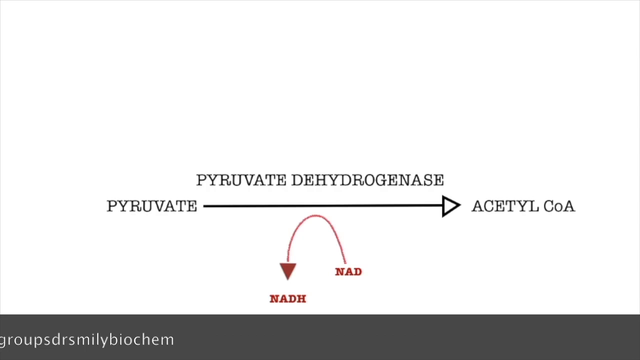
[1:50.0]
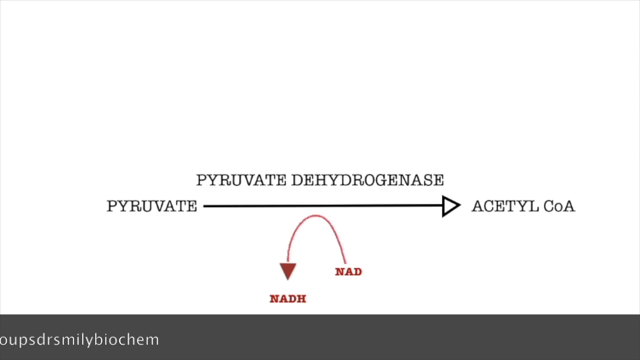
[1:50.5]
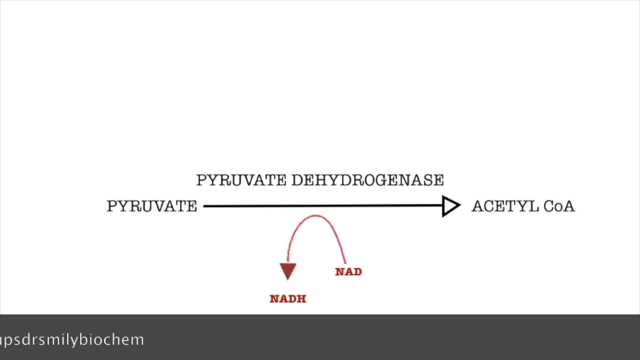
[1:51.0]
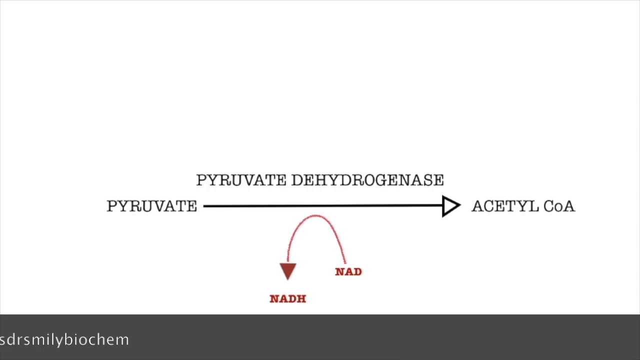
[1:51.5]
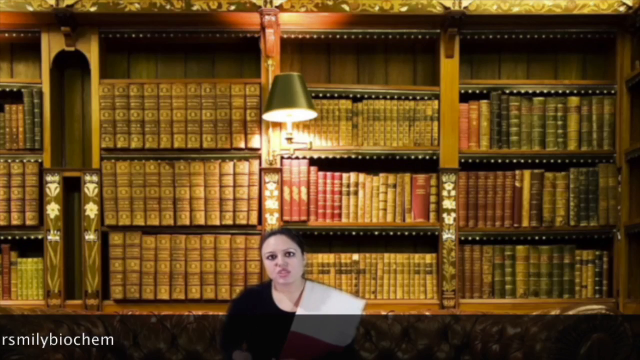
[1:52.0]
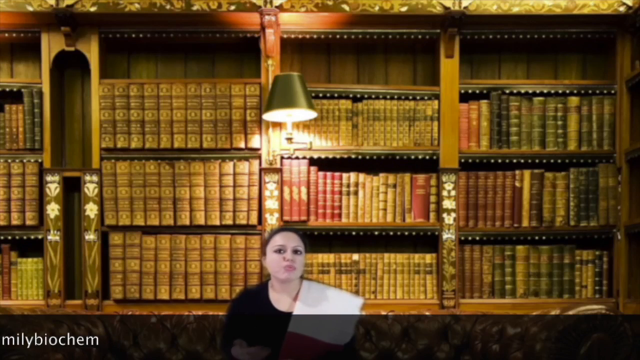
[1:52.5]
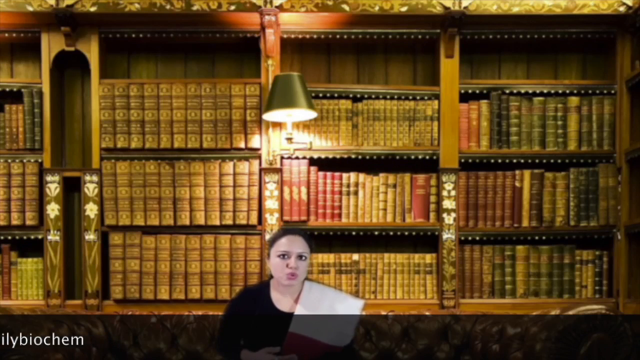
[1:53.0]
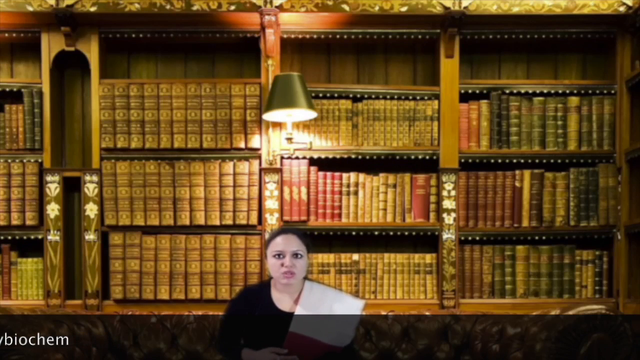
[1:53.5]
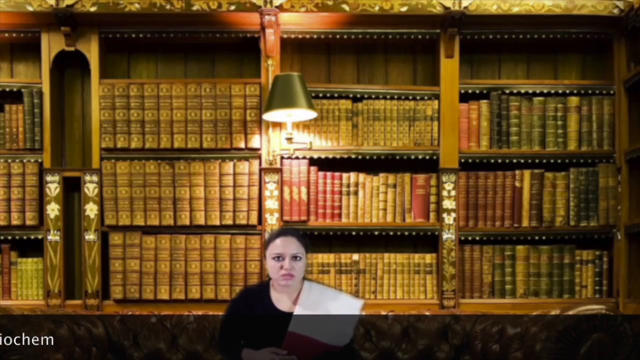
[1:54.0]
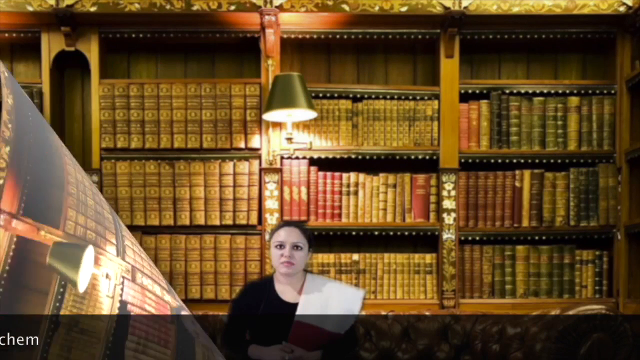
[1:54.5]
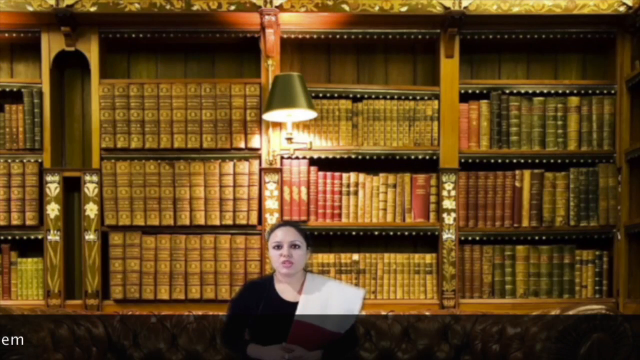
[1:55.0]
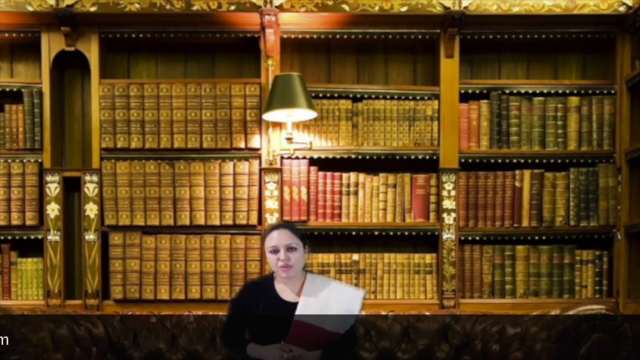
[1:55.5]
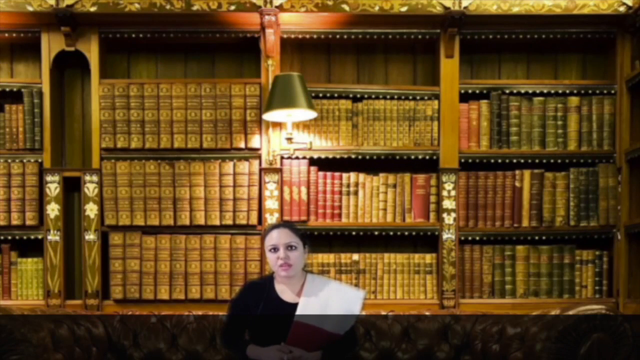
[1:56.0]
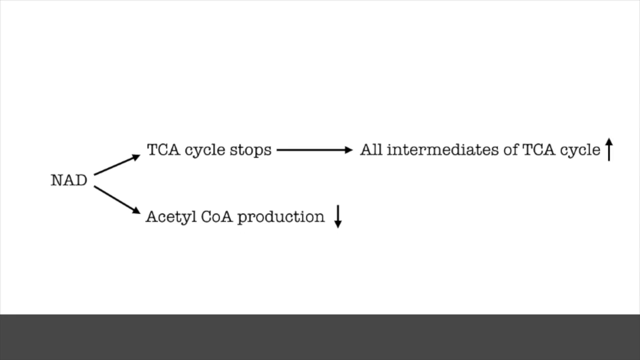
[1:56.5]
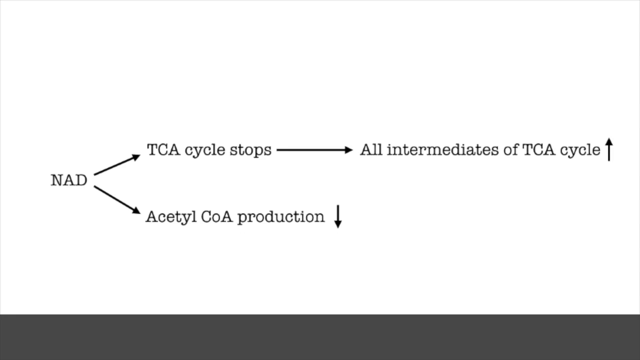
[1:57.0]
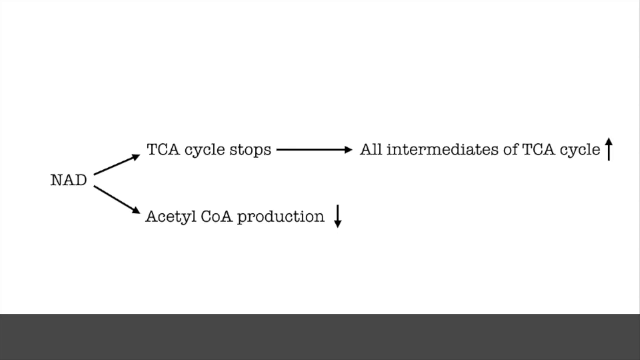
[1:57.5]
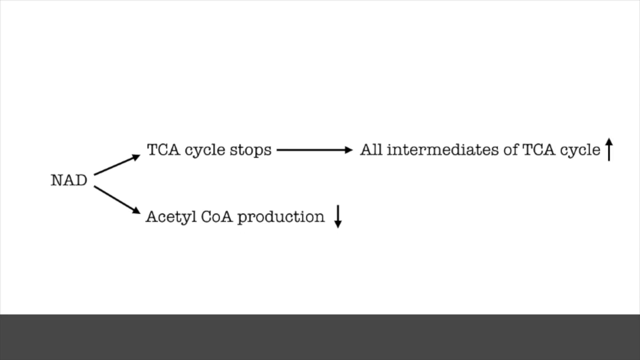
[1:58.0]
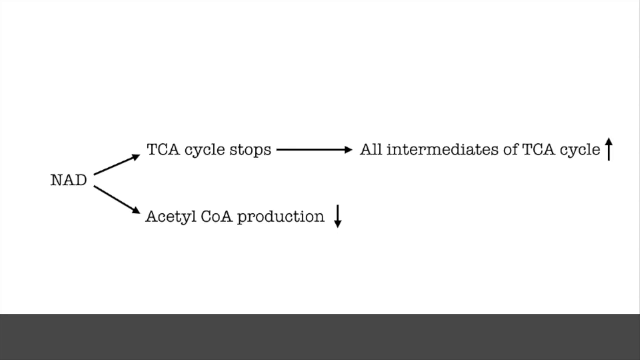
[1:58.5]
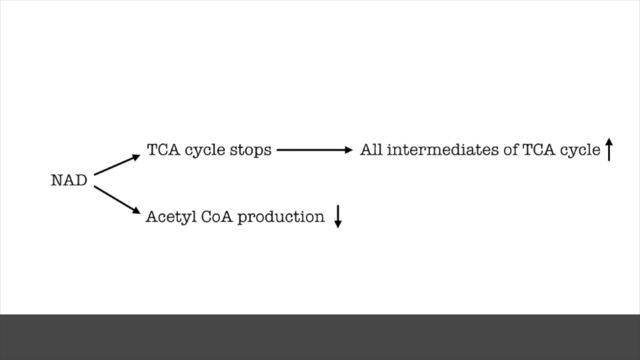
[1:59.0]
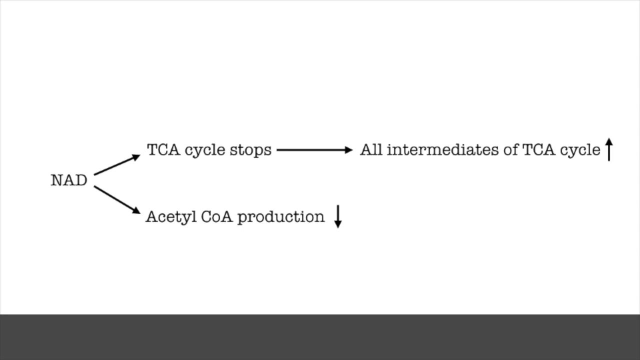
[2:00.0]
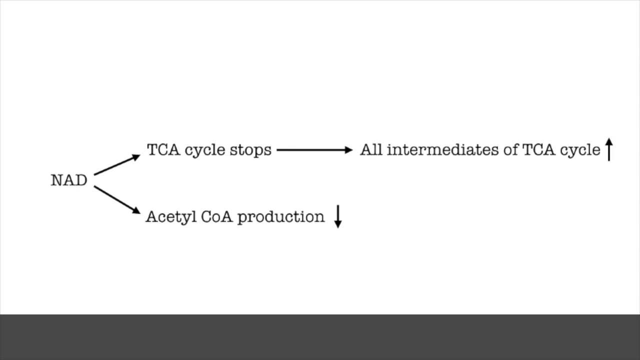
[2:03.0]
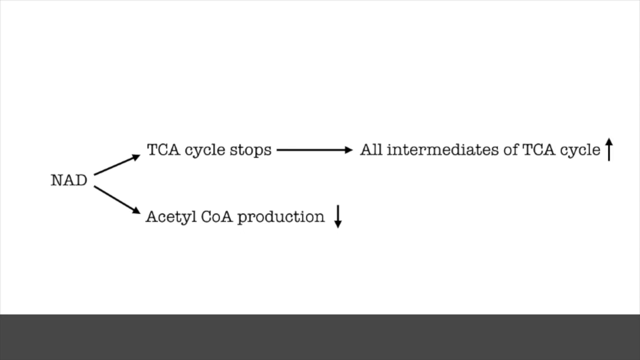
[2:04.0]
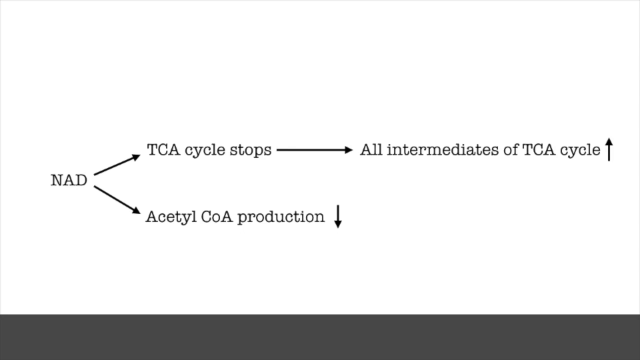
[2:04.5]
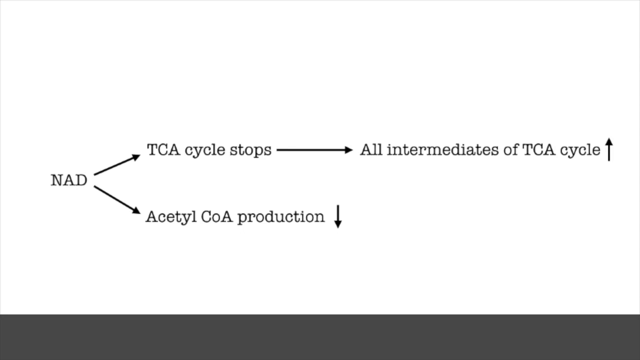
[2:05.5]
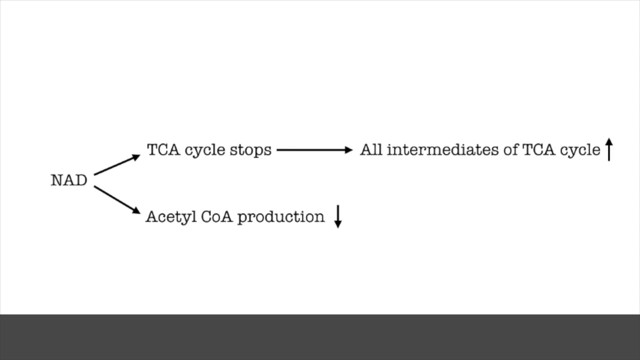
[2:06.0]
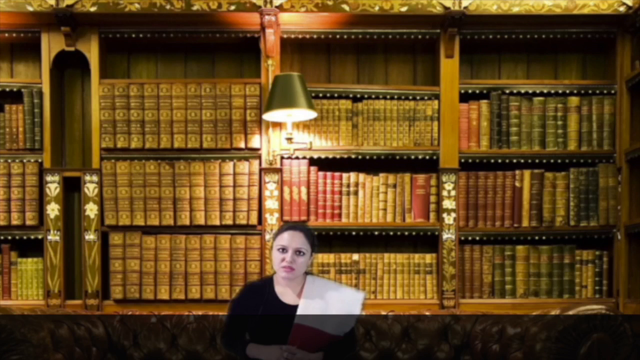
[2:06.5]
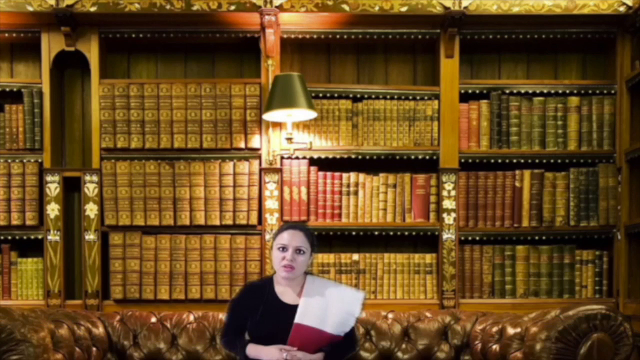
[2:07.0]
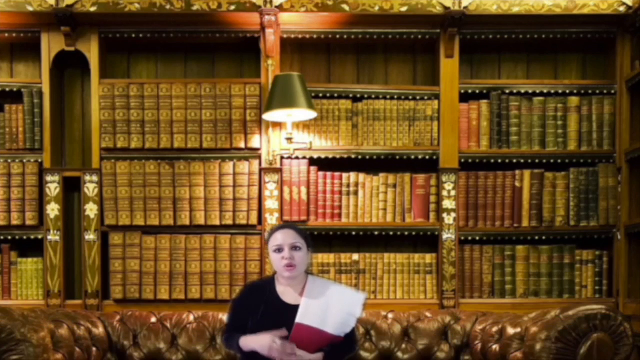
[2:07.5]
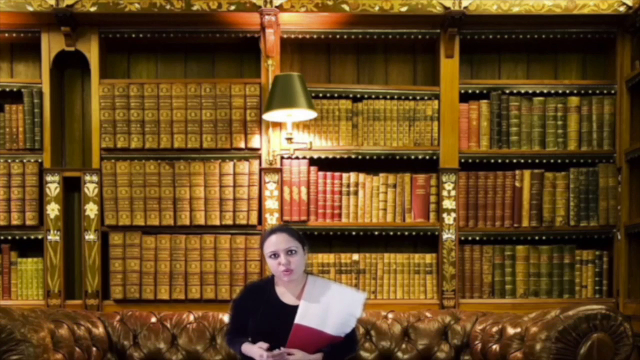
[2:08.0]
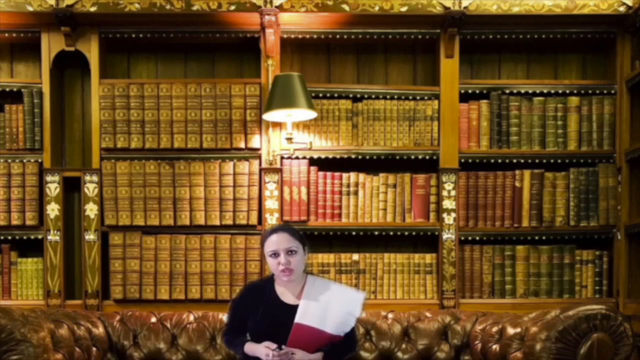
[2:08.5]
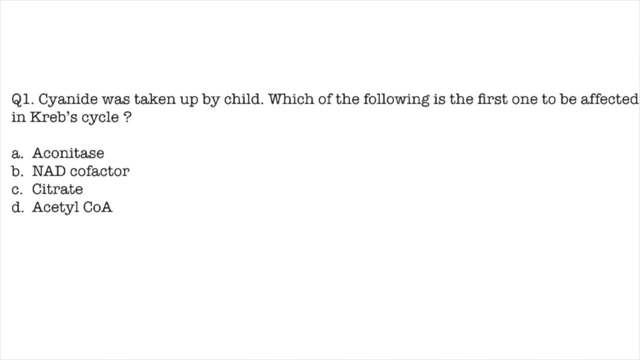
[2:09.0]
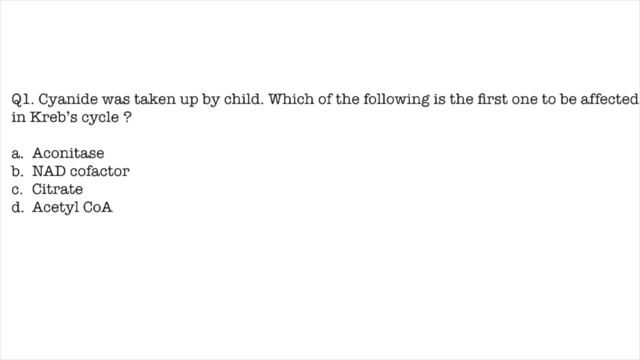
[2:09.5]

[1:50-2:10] A pyruvate dehydrogenase diagram shows pyruvate going down an arrow and turning into acetyl-CoA, and at the bottom of the screen, in red, NAD with an arrow turning into NADH. Dr. Smiley comes back, shown sitting on the couch and talking, with the bookshelf backdrop behind her. What looks like a page suddenly peels across the screen as if being peeled off, but the same image is left: Dr. Smiley still talking on the couch, and nothing seems to change. Then the screen changes to a white screen with the writing "NAD" and arrows facing away from it at 45-degree angles, one up and one down. The top arrow points to "TCA cycle stops", another arrow points to "all intermediates of TCA cycle up", and the bottom arrow points to "acetyl-CoA production down".